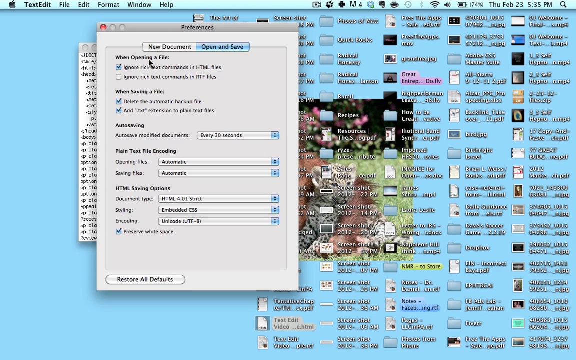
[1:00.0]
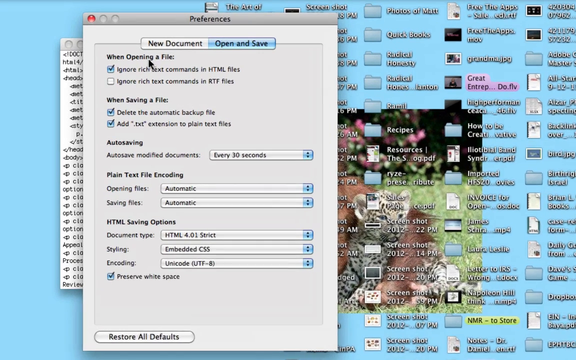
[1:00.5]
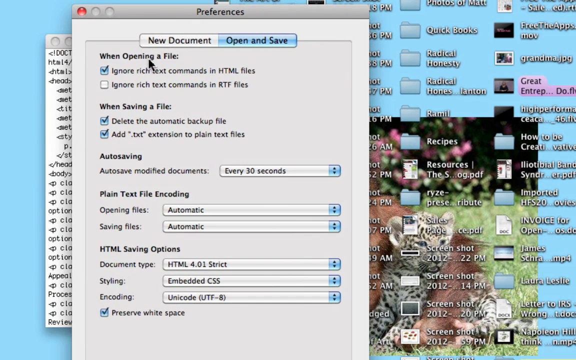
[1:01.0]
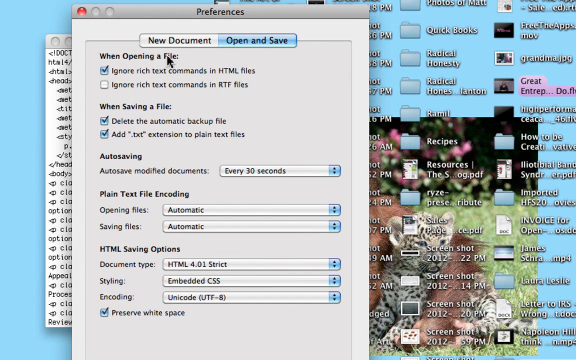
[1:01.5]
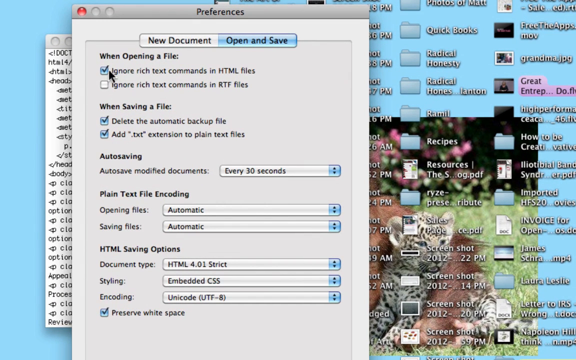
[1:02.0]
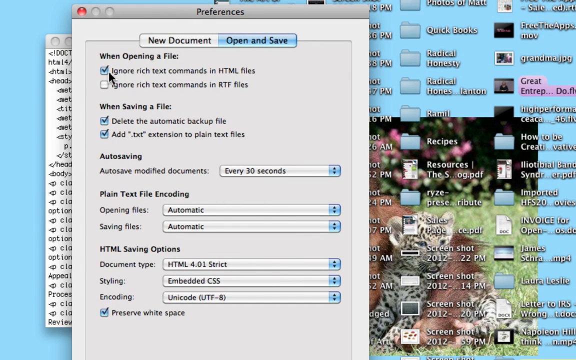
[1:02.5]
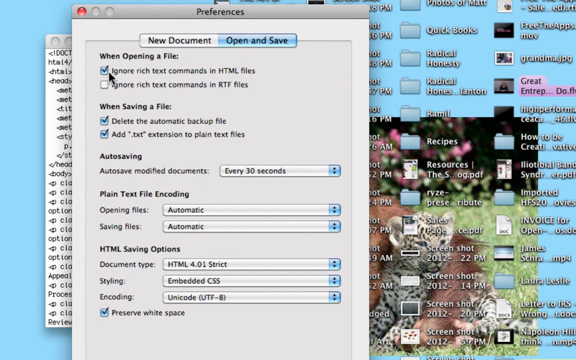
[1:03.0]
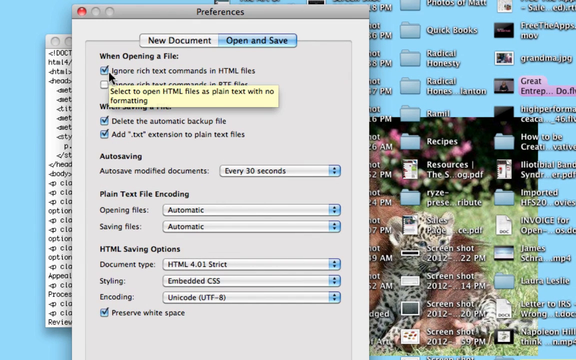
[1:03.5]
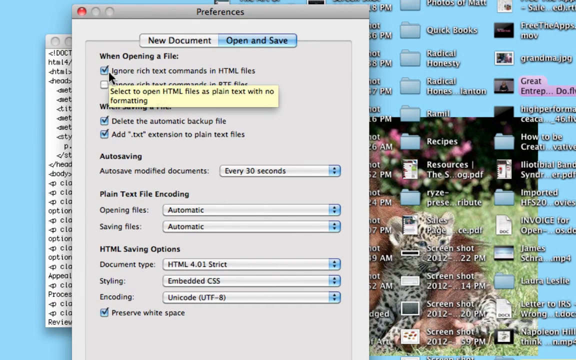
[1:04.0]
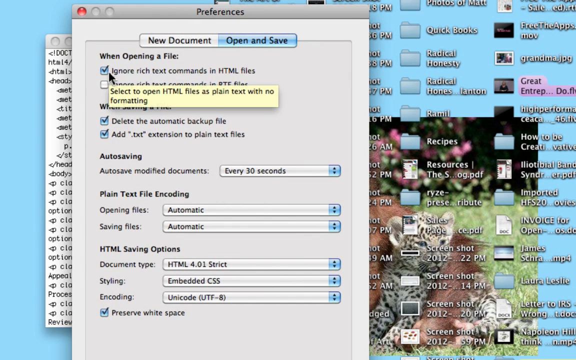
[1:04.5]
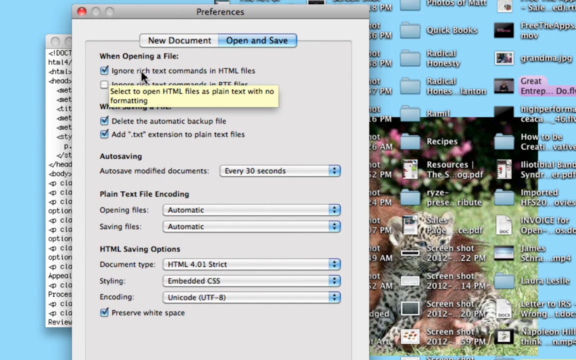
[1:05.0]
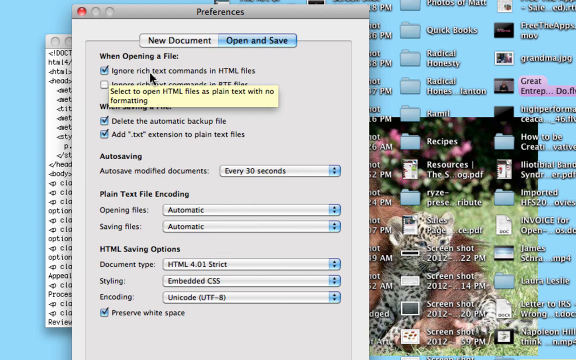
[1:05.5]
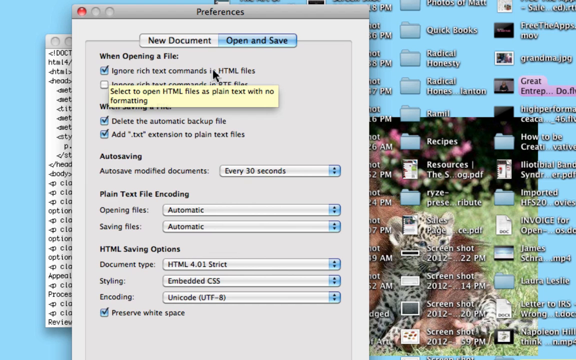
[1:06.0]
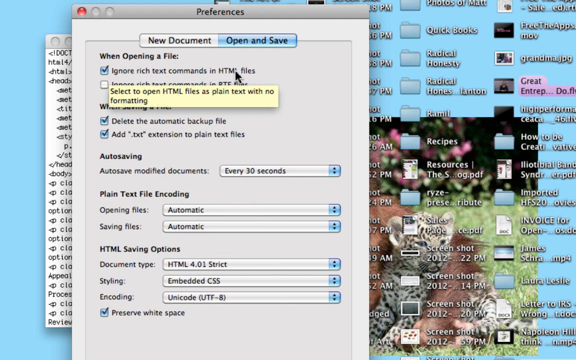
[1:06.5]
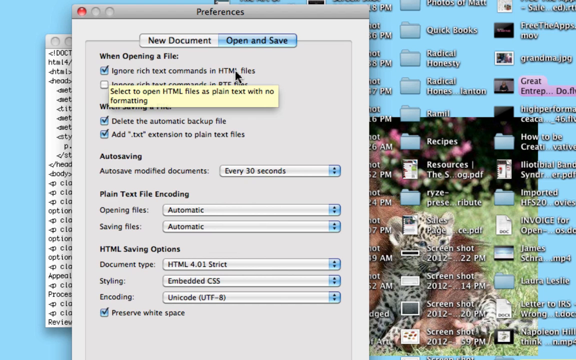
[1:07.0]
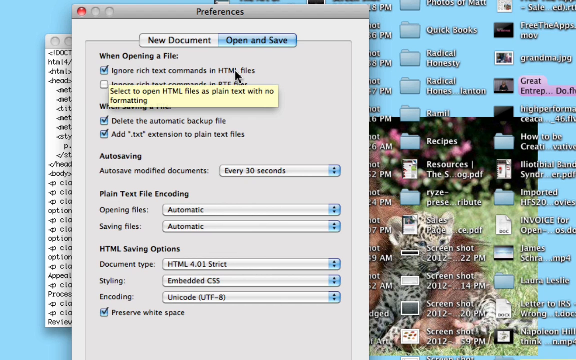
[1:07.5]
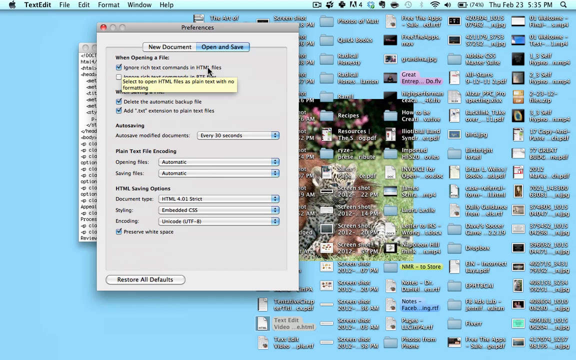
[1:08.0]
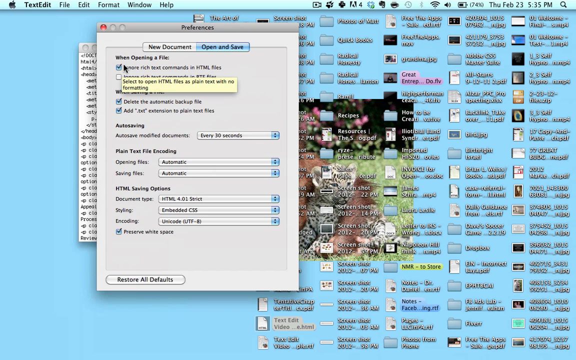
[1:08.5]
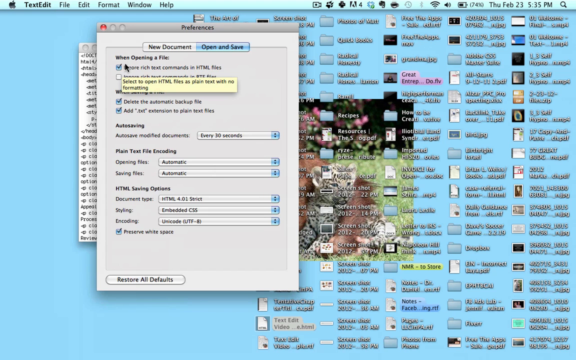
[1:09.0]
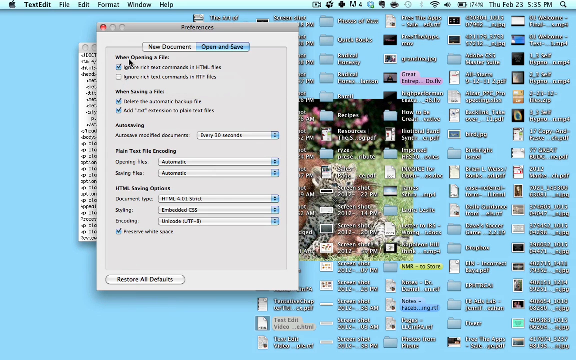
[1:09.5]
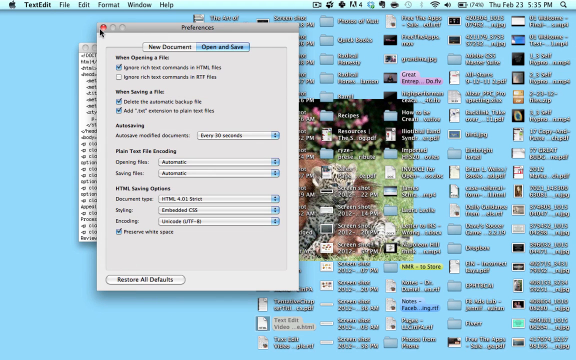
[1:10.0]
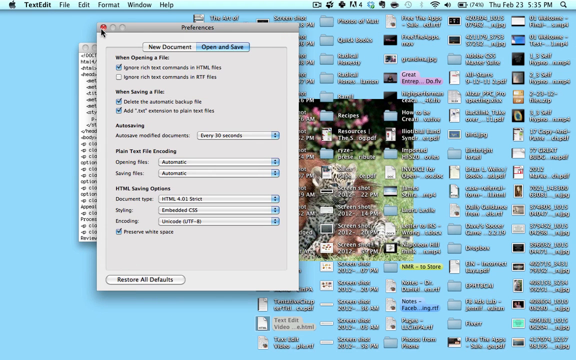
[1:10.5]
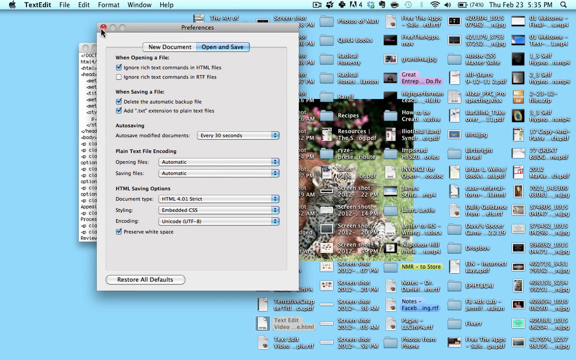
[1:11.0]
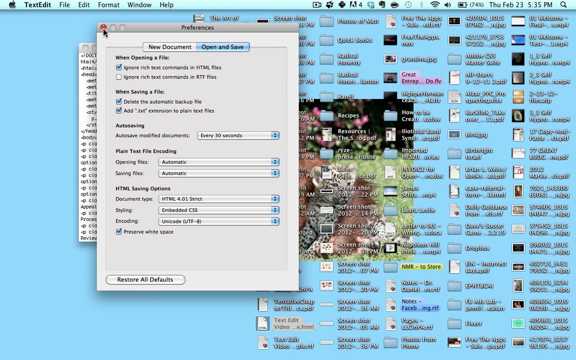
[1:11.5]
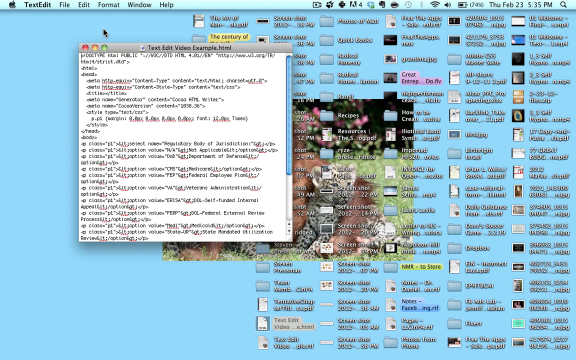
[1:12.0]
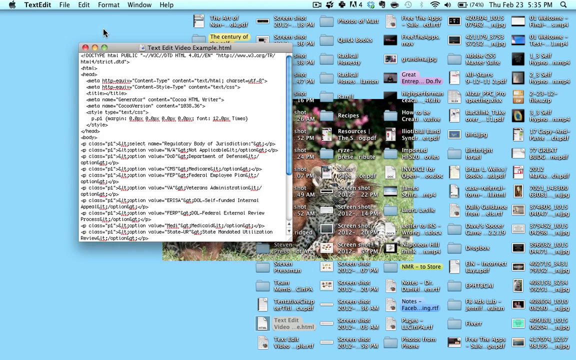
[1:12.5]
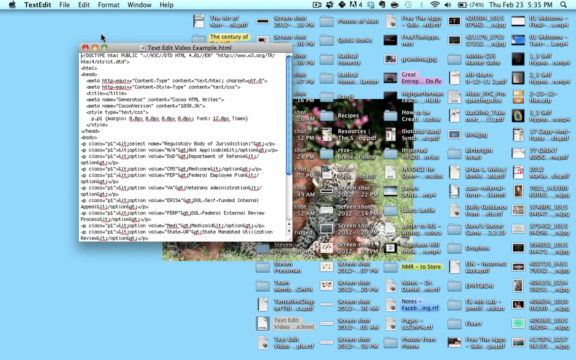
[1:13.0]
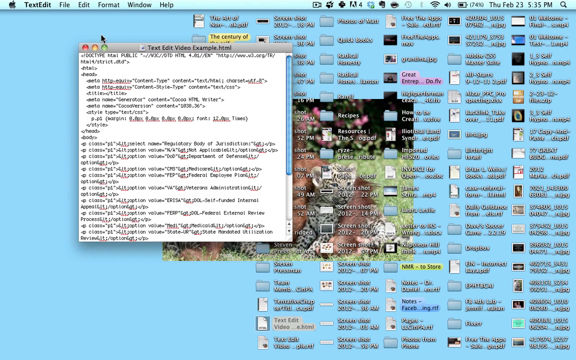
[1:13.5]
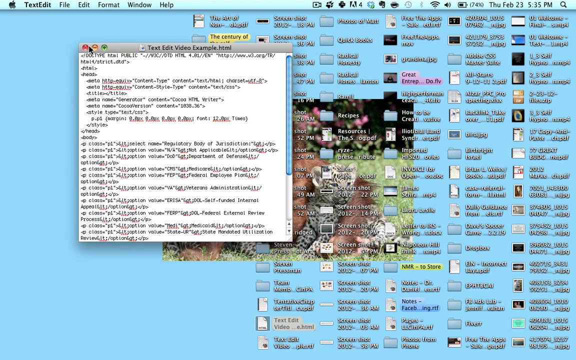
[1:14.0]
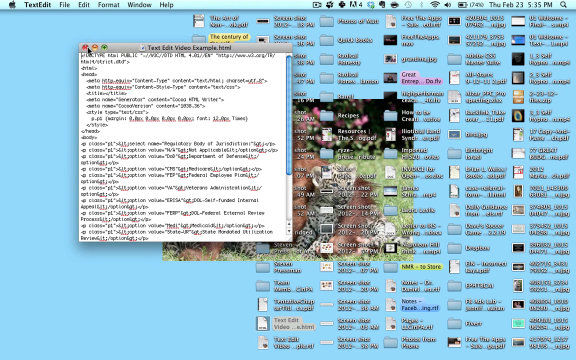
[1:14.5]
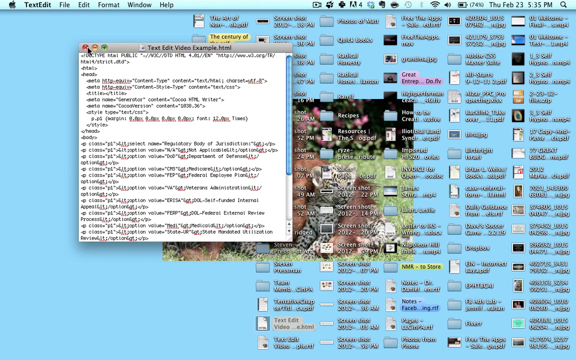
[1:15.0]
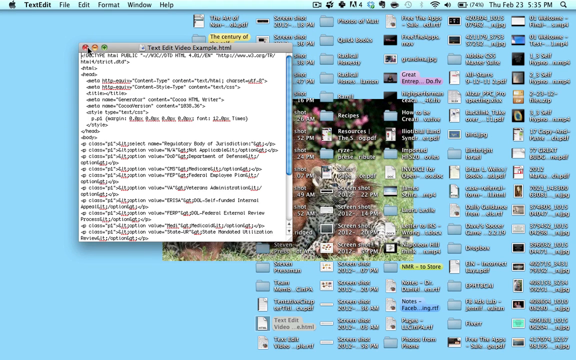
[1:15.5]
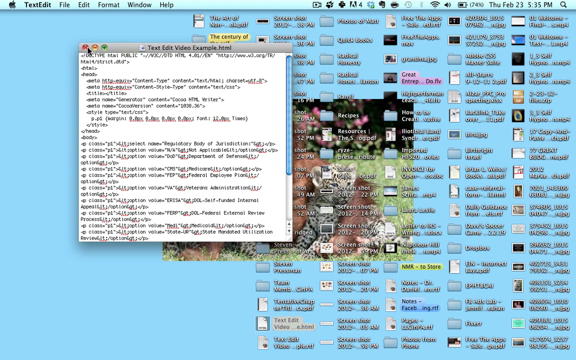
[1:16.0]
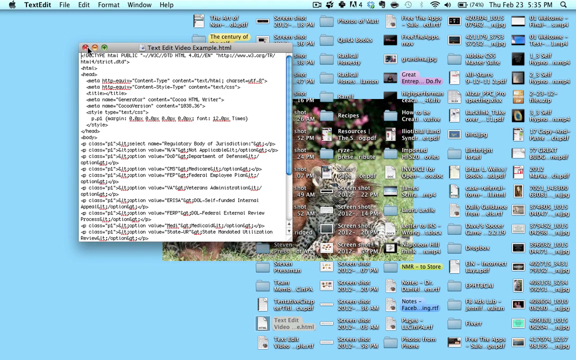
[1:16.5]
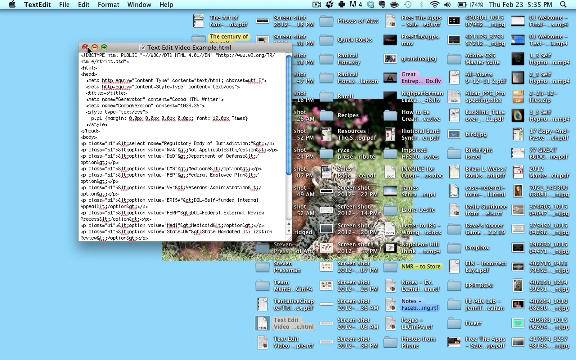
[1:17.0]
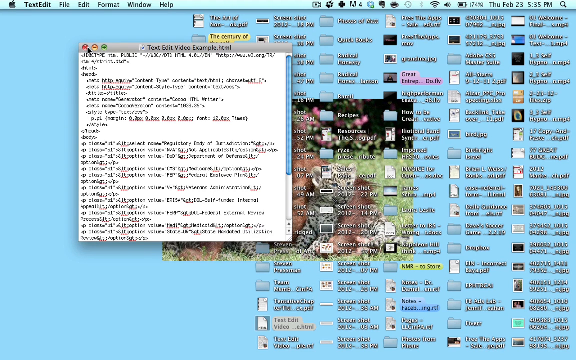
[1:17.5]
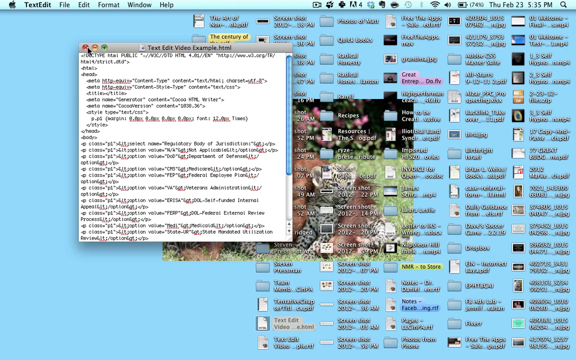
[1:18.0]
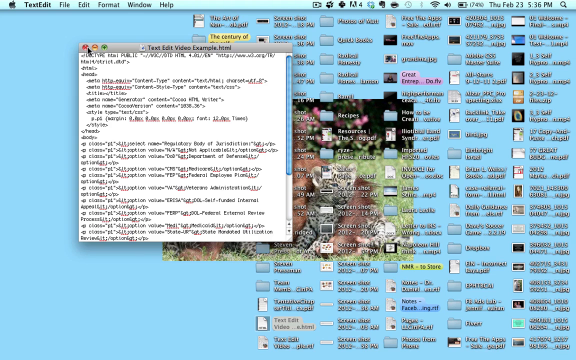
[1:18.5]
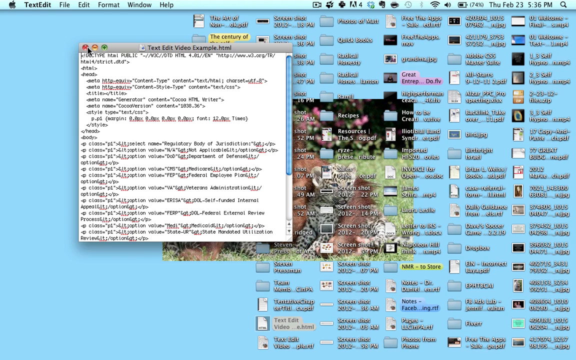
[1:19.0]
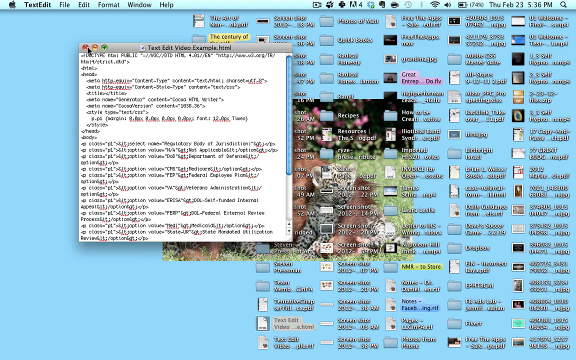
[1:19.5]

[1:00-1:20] The view zooms in on the preferences window slightly, until the height of the preferences window is the height of the video. The cursor moves down in the Open and Save tab to a heading "when opening a file" and then to a checkbox under it next to "Ignore rich text commands in HTML files". It hovers above that checkbox until a yellow note appears next to the cursor with the words "Select to open HTML files as plain text with no formatting". The cursor moves along the sentence "Ignore rich text commands in HTML files", and then the view zooms back out. The cursor moves to the red close button in the upper left of the preferences window, and the window closes, revealing the text edit video example window under it. The cursor hovers above the red close button on that window too.